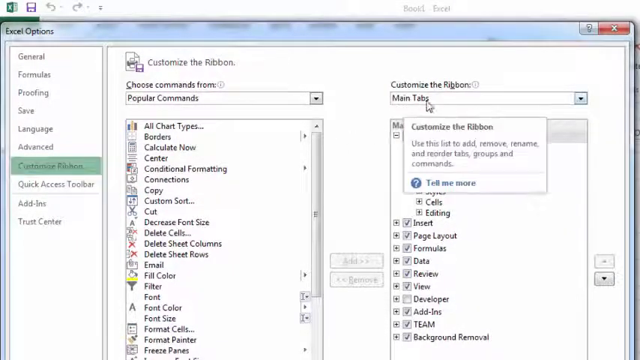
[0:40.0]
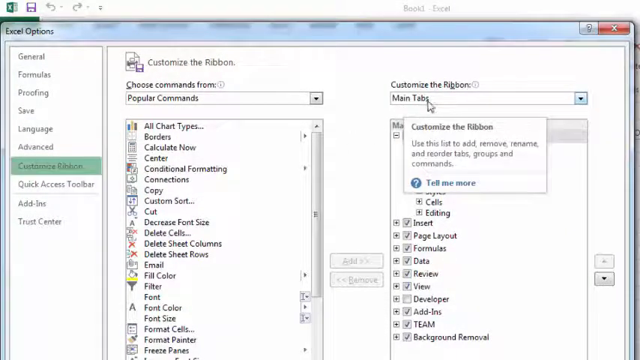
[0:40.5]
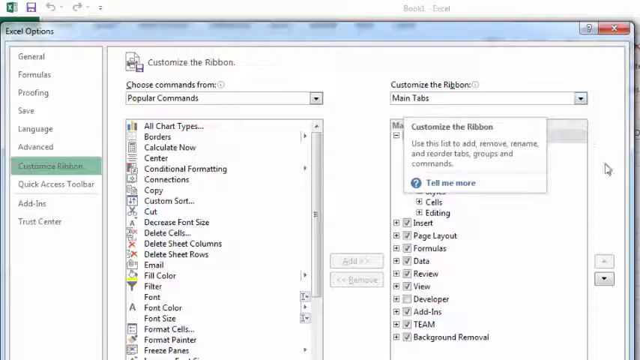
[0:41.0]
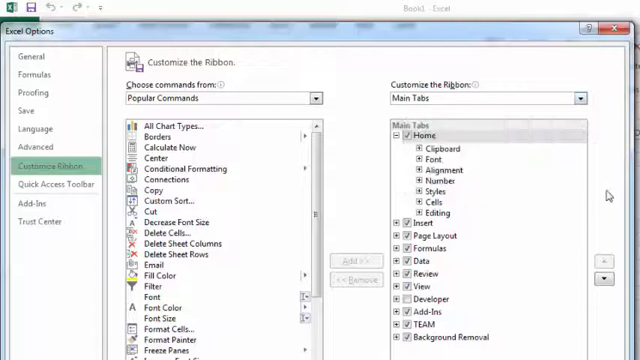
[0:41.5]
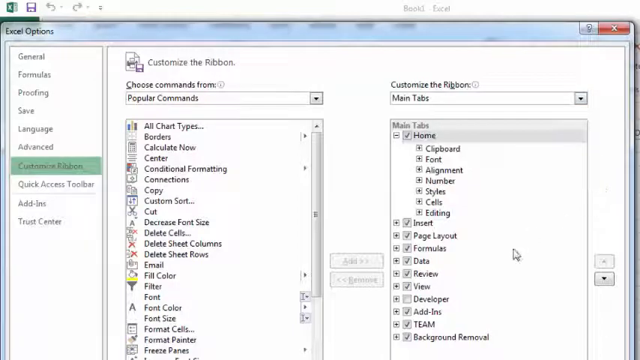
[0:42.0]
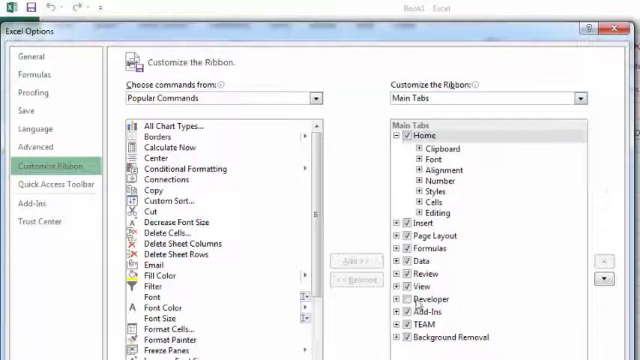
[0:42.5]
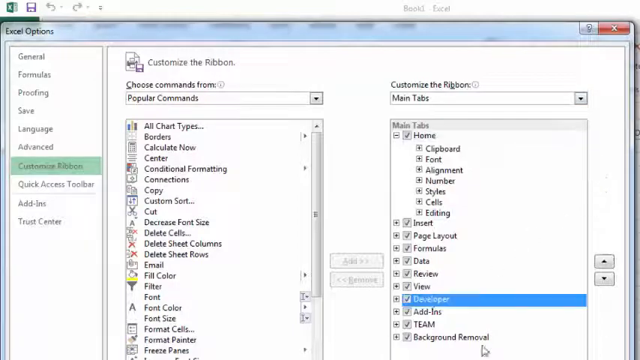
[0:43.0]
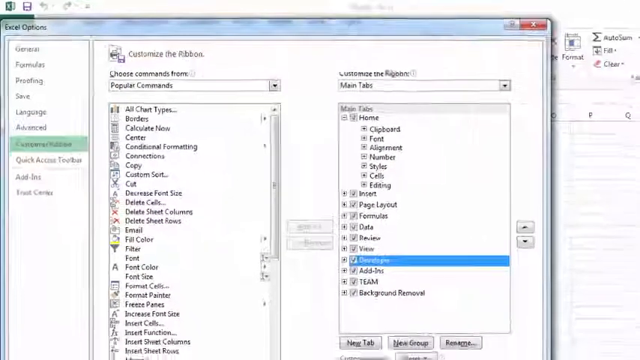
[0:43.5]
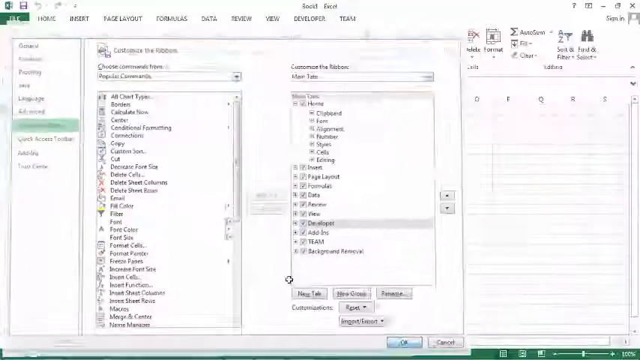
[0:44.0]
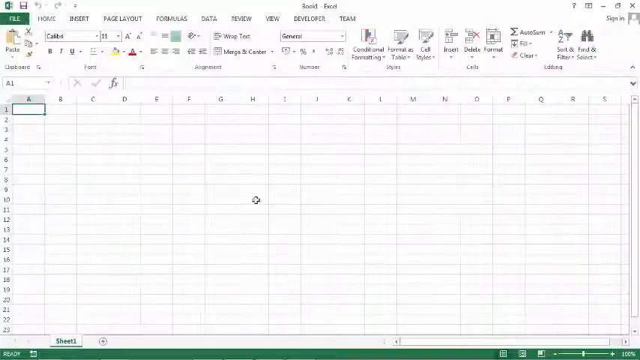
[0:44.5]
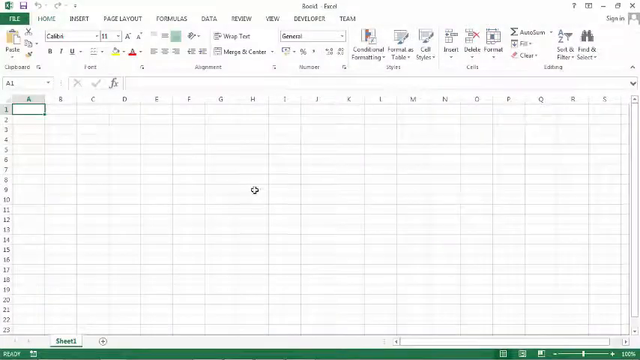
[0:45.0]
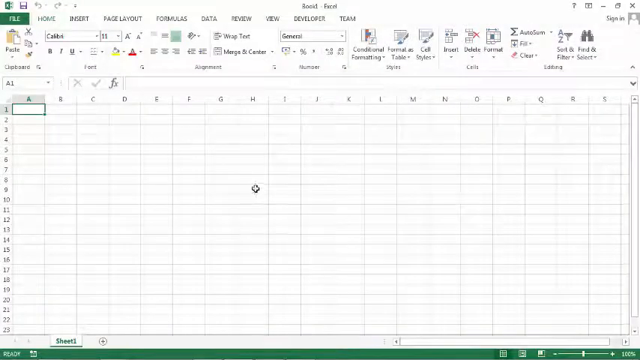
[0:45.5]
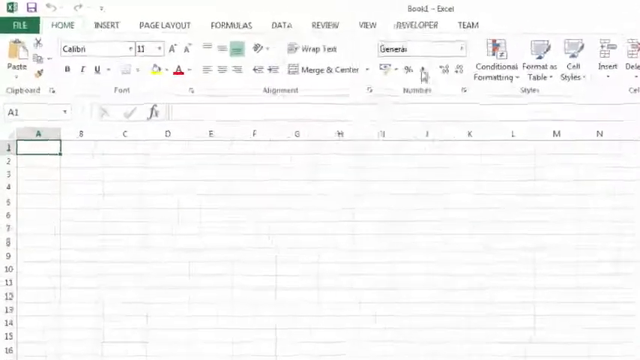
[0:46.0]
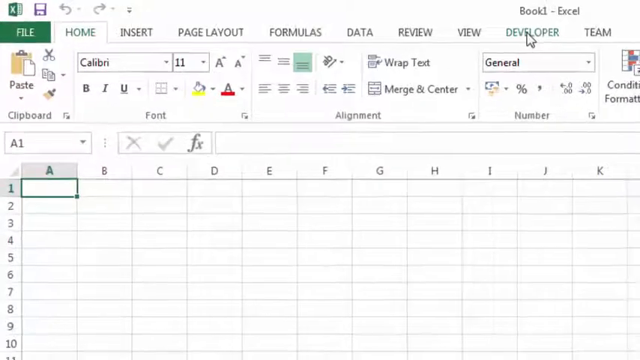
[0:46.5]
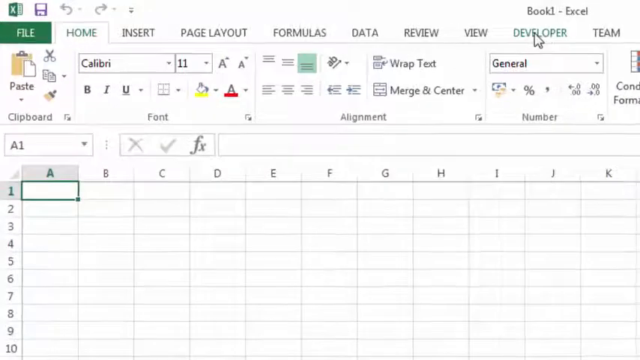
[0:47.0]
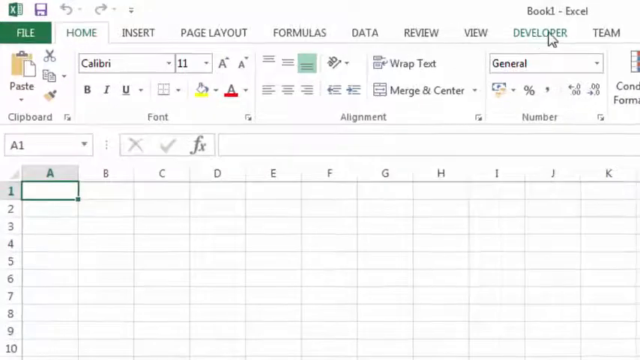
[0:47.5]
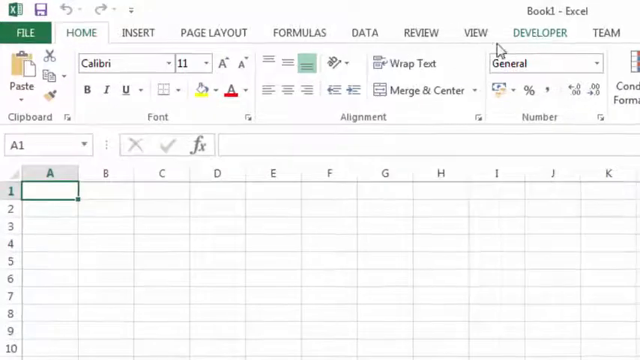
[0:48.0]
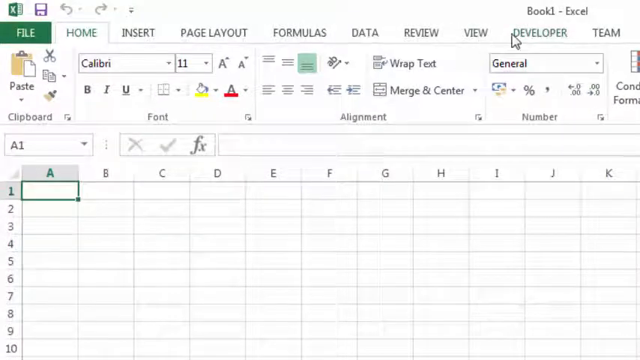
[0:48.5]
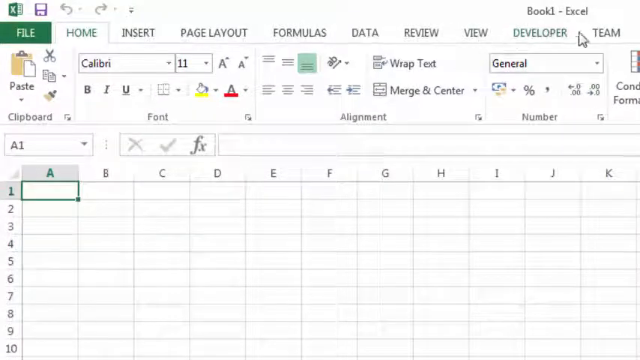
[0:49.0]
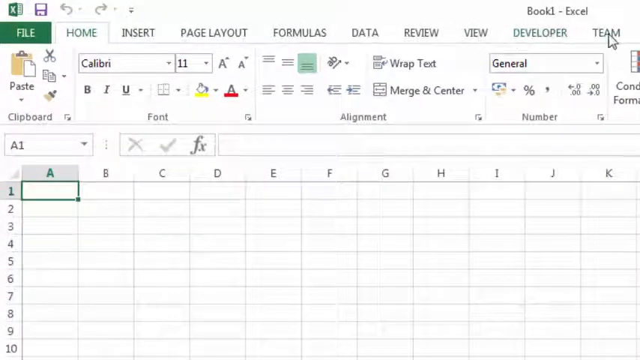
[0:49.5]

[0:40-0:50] Customize Ribbon is selected in Excel Options. On one side are the commands to choose from, such as popular commands, with items including all chart types, borders, calculating, centre, connections, copy and decrease font size. On the other side, the main tabs list shows the tabs that appear on the main tabs. Developer is not among the main tabs, so it is added to them so that it appears in Excel.